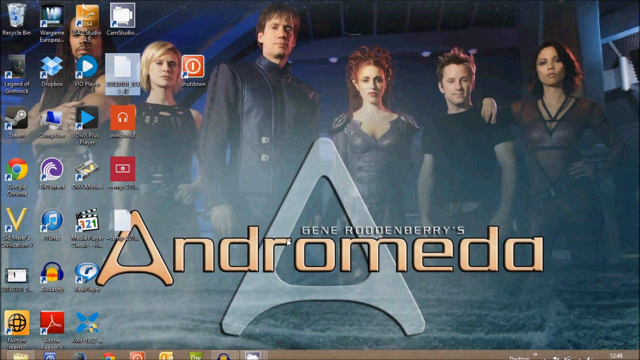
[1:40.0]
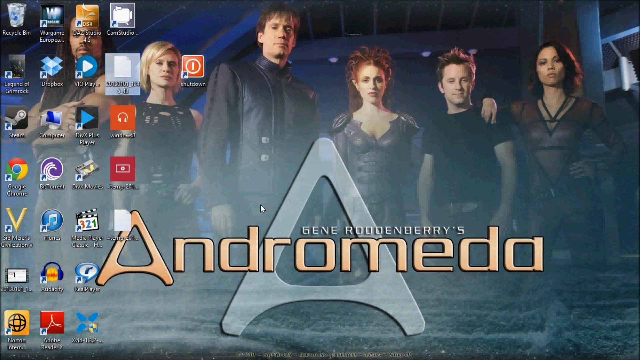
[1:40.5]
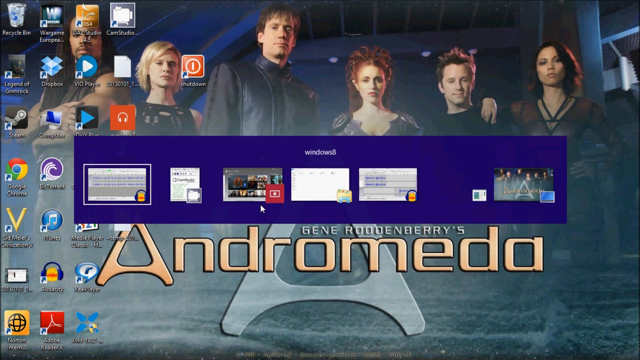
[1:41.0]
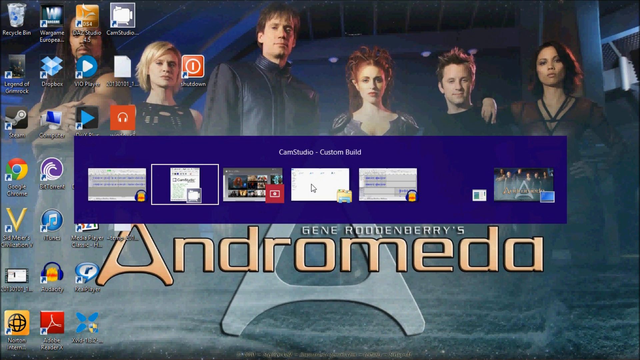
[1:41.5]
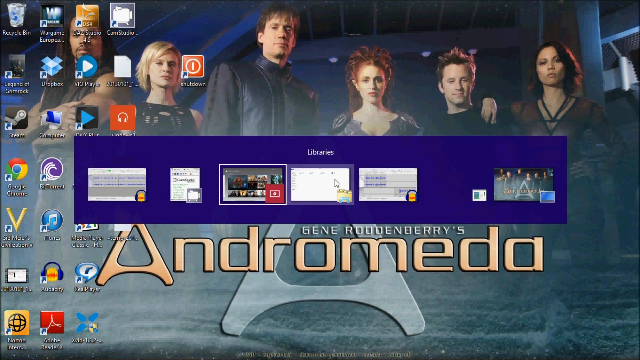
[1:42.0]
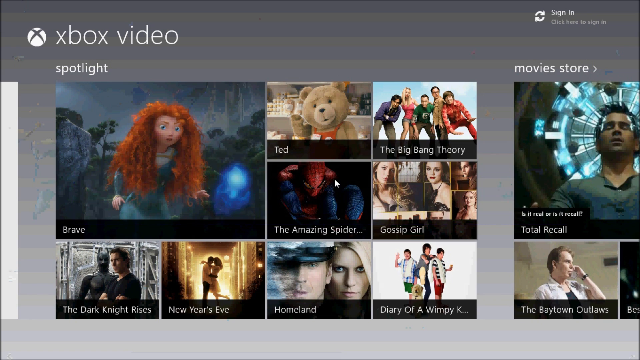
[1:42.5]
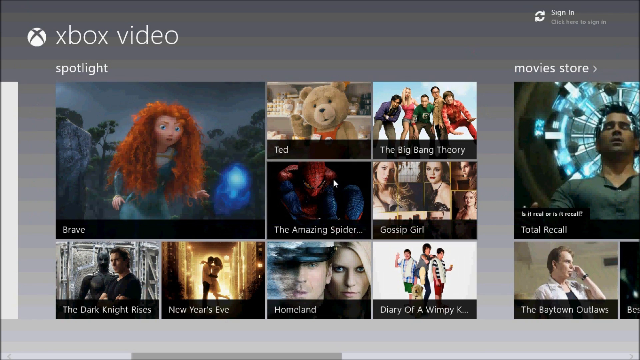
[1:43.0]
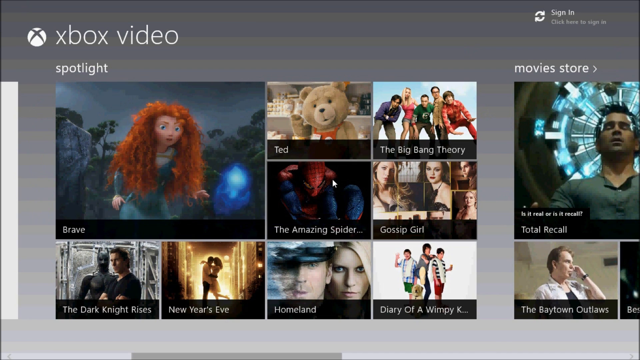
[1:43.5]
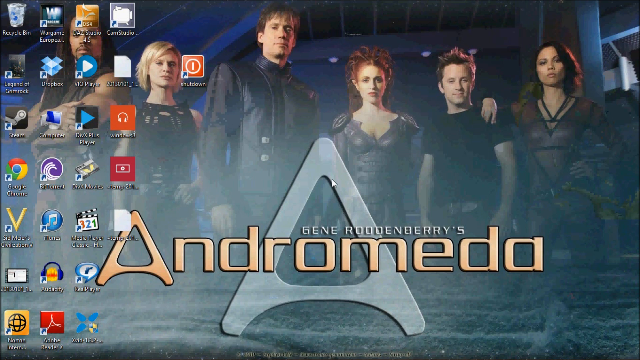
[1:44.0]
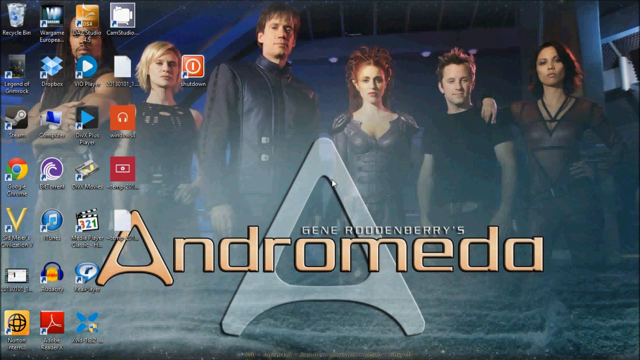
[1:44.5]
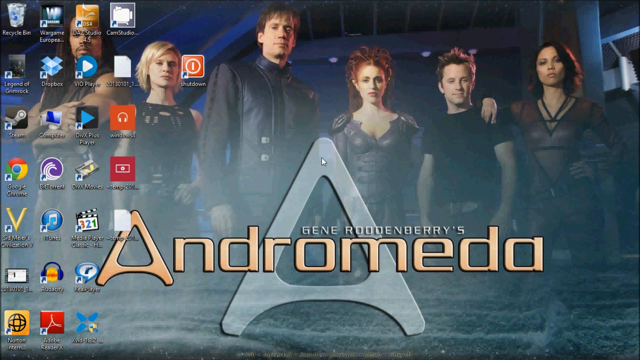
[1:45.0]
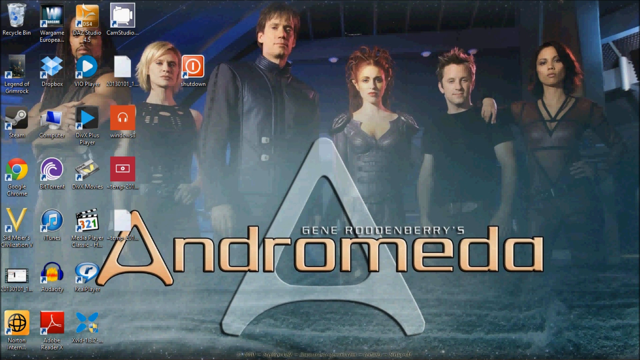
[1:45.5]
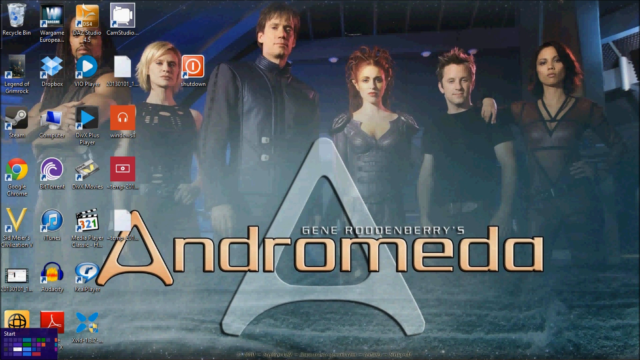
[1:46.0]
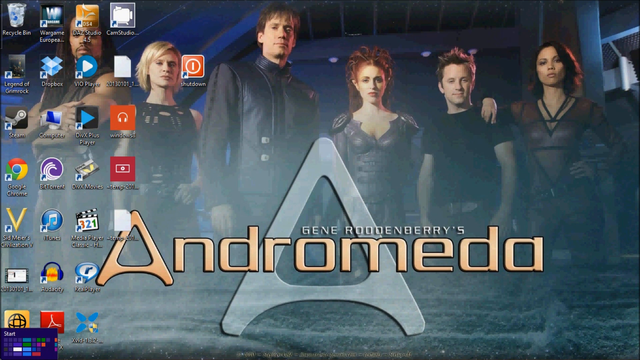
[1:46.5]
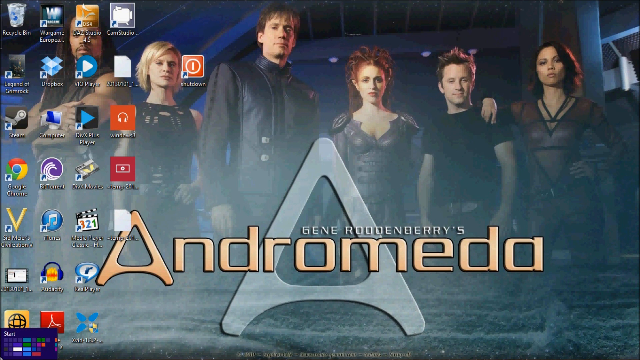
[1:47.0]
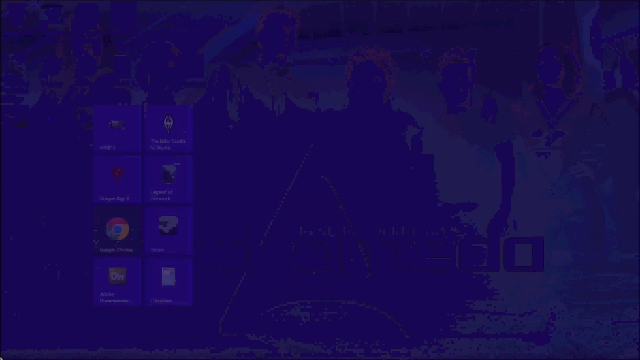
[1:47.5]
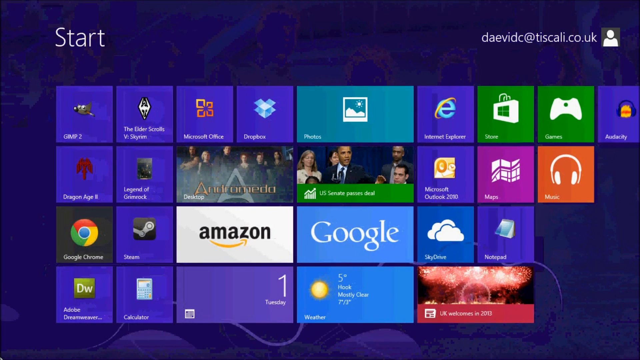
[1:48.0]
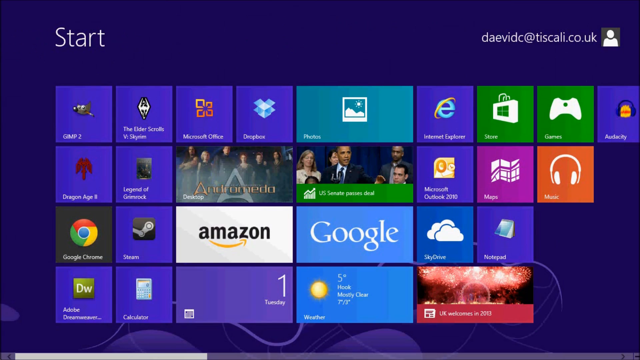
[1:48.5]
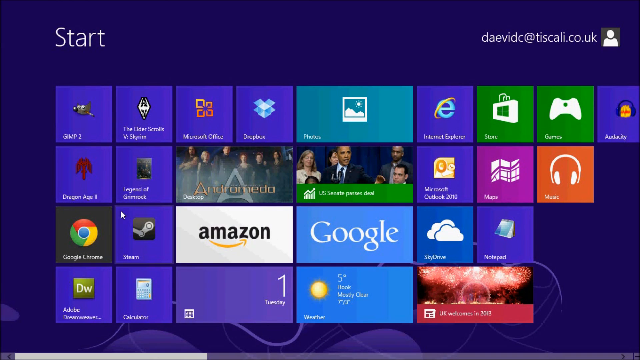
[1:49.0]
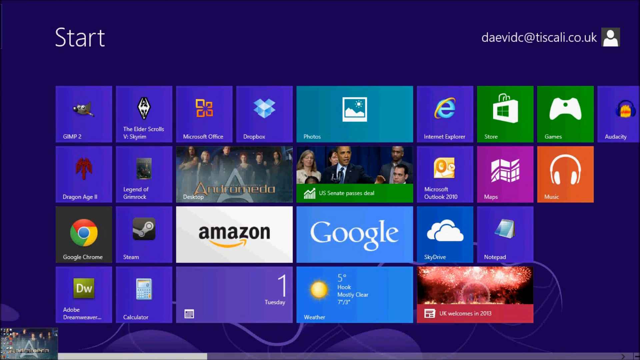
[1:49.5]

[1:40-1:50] Gene Roddenberry's Andromeda appears, looking like the cover from the original show; it is the background of the person's desktop user interface and is kind of faded so it does not take over the available apps. The person clicks on the screen and brings up the library section, then clicks there, opening Xbox Video. The movie Brave is shown, with an app to open it underneath the spotlight. Also shown are Ted, The Big Bang Theory, "The Amazing Spider" followed by a couple of dots instead of "man", Gossip Girl, and one for Batman. The person clicks off and moves back to the interface, where everything pops out once again, and then seems to go back to the home screen, which still shows Gene Roddenberry's Andromeda in the background.